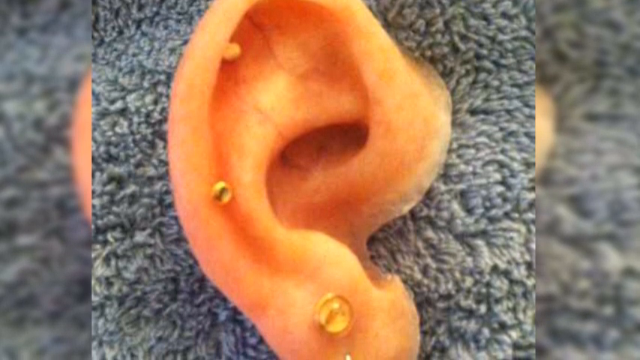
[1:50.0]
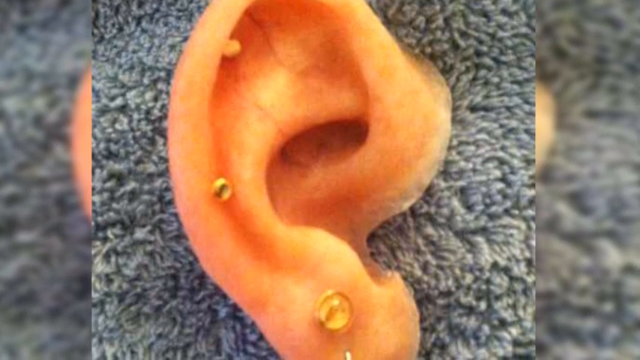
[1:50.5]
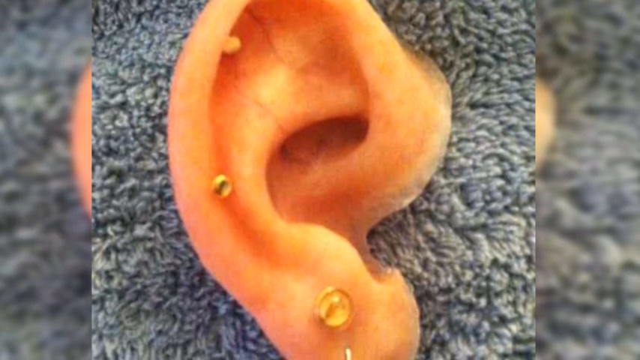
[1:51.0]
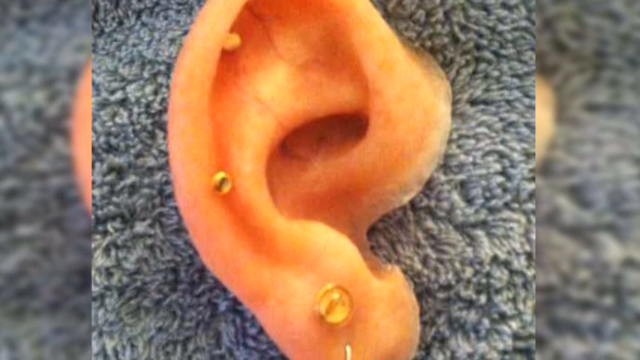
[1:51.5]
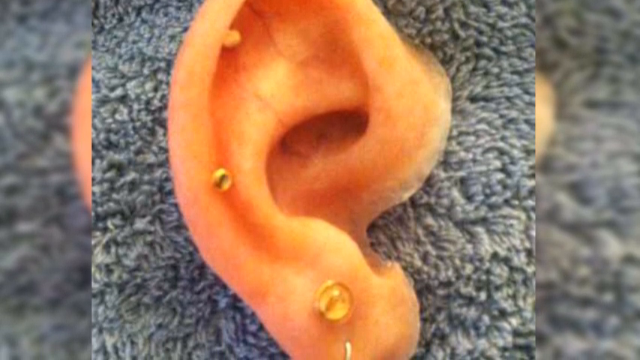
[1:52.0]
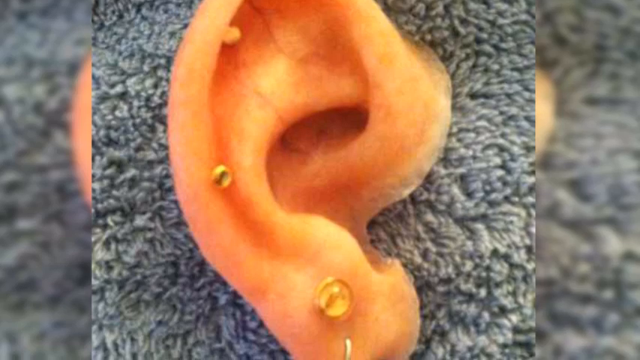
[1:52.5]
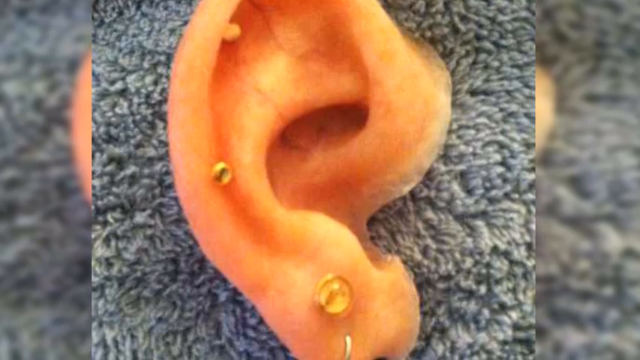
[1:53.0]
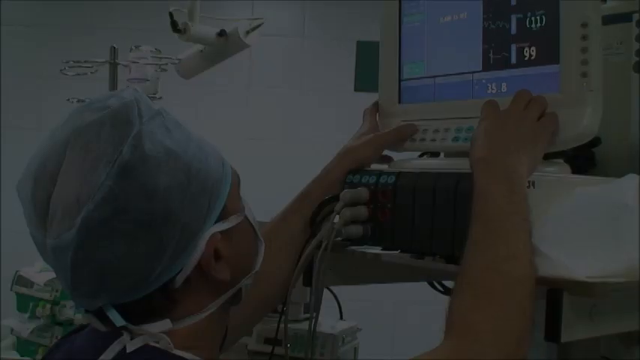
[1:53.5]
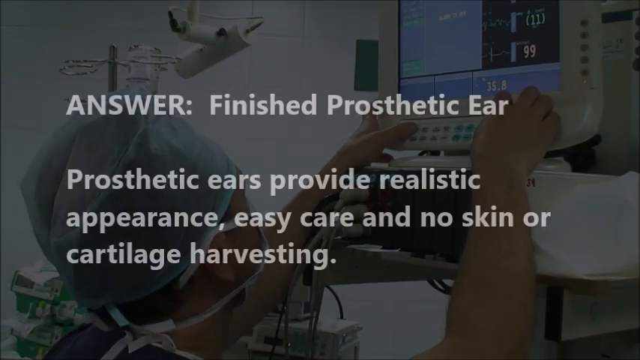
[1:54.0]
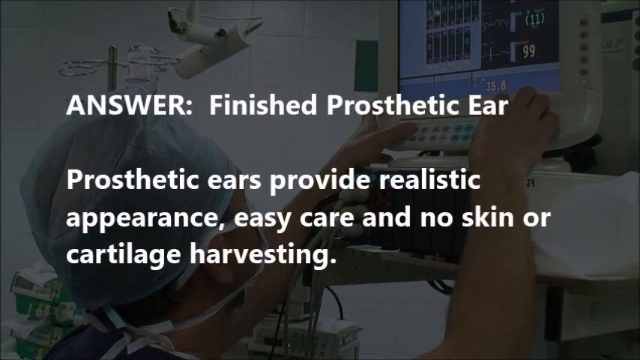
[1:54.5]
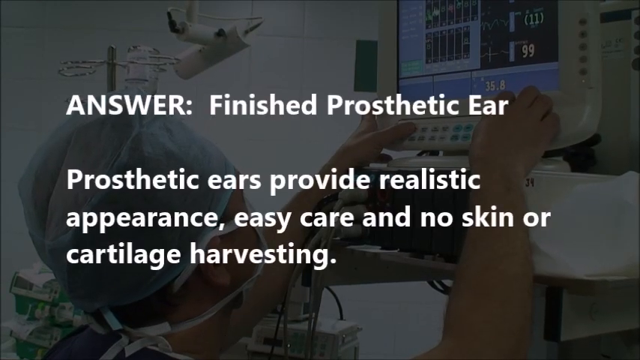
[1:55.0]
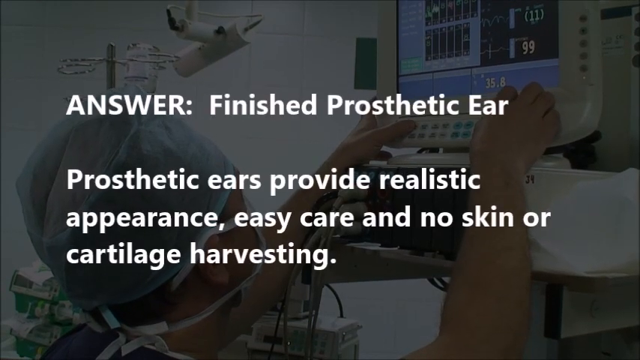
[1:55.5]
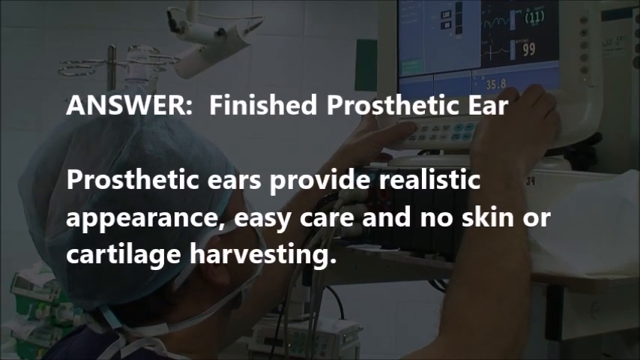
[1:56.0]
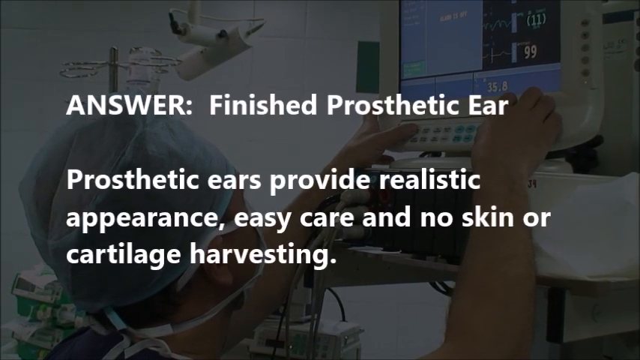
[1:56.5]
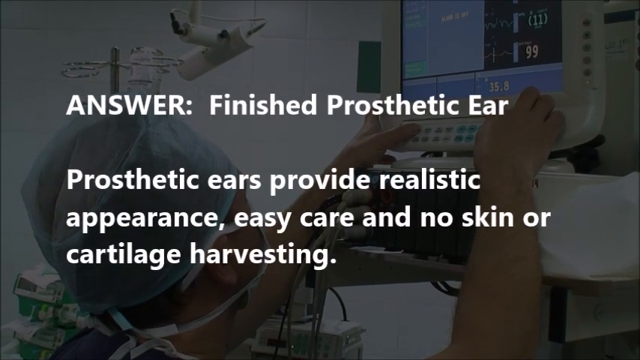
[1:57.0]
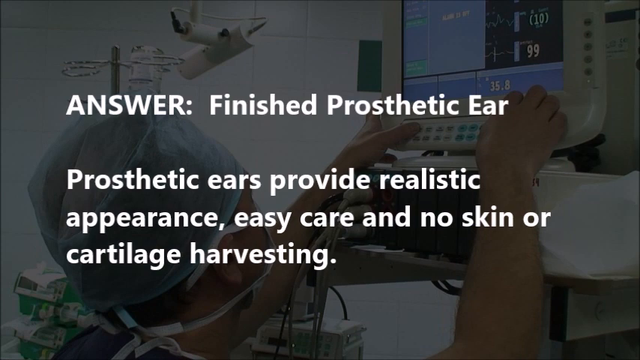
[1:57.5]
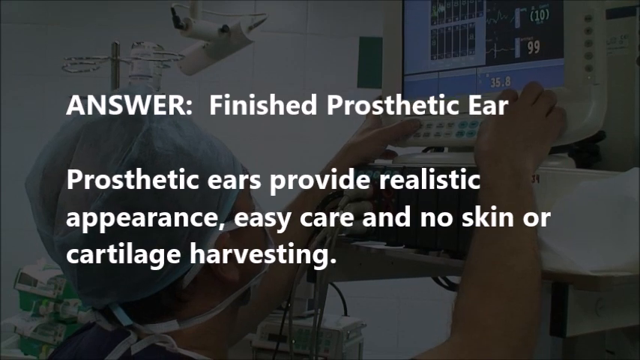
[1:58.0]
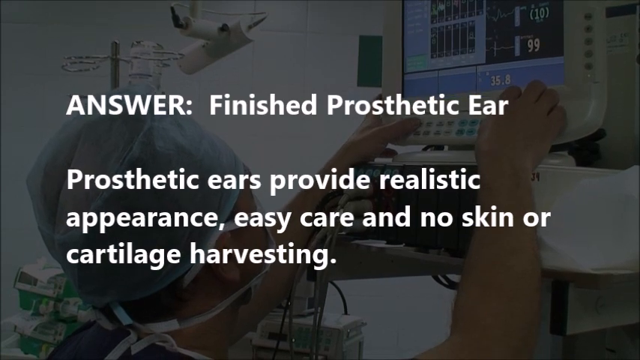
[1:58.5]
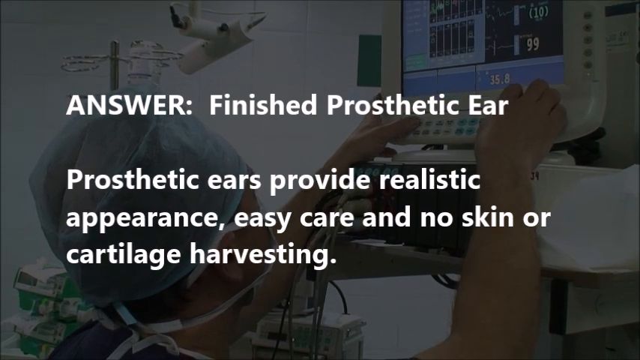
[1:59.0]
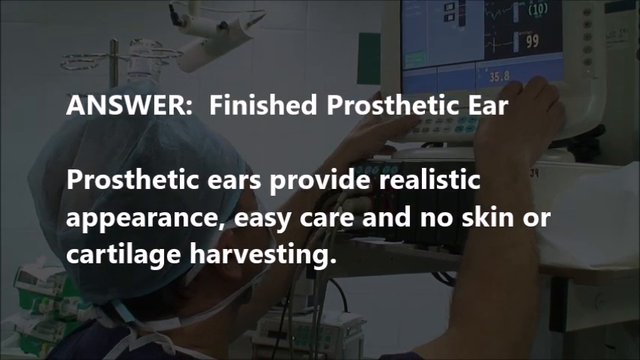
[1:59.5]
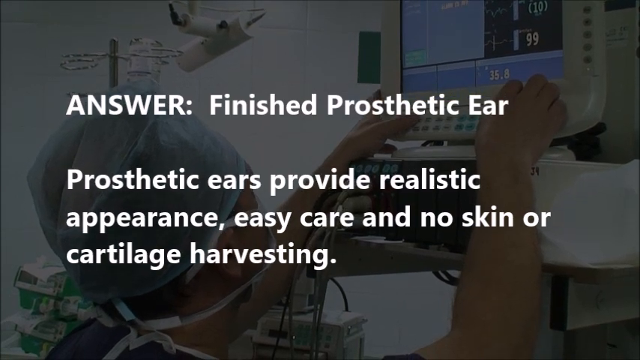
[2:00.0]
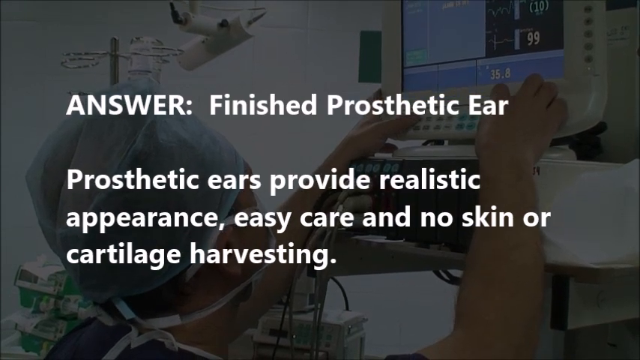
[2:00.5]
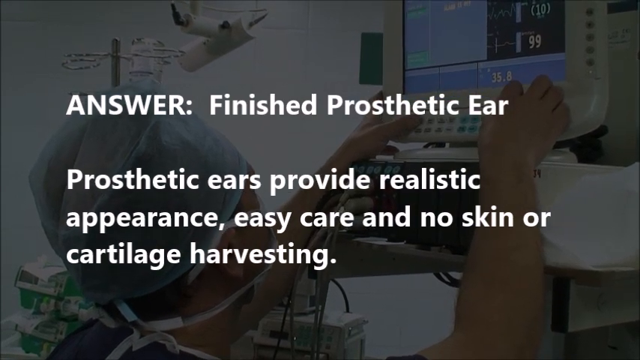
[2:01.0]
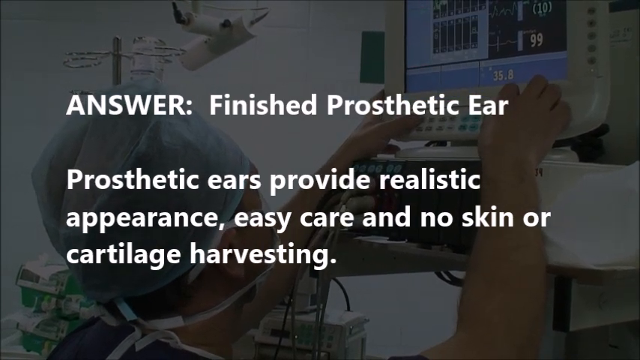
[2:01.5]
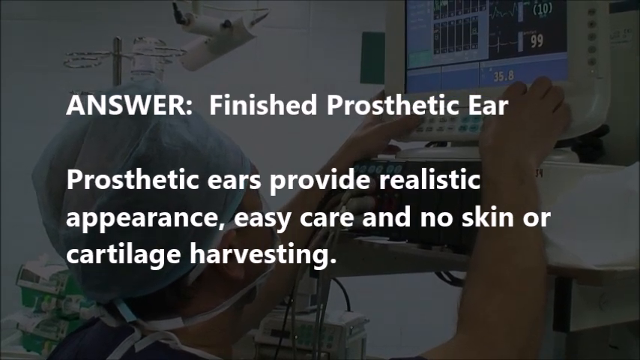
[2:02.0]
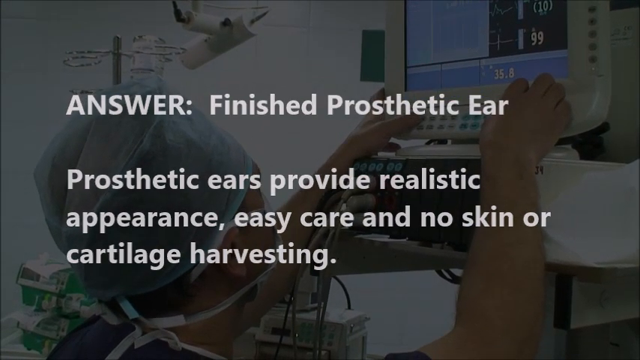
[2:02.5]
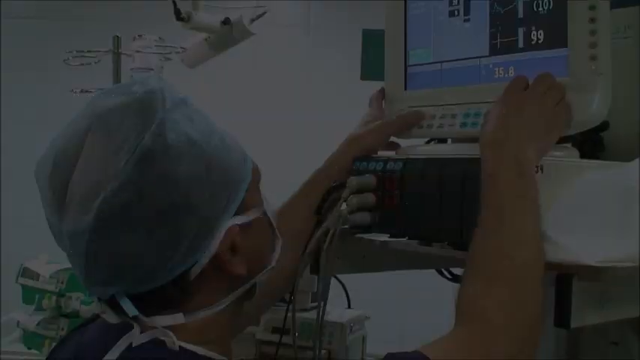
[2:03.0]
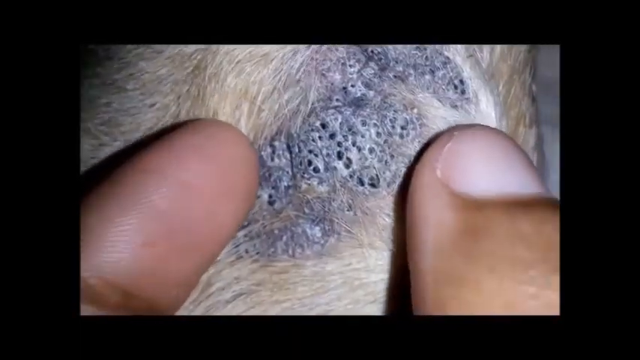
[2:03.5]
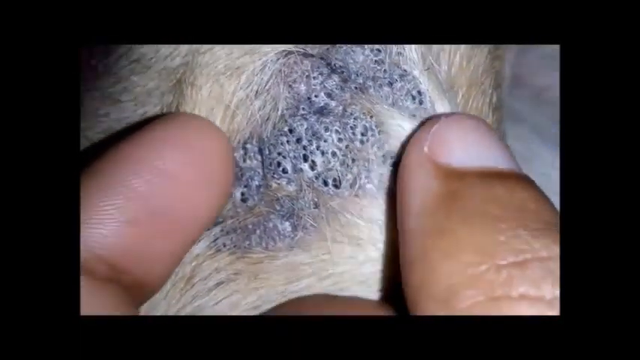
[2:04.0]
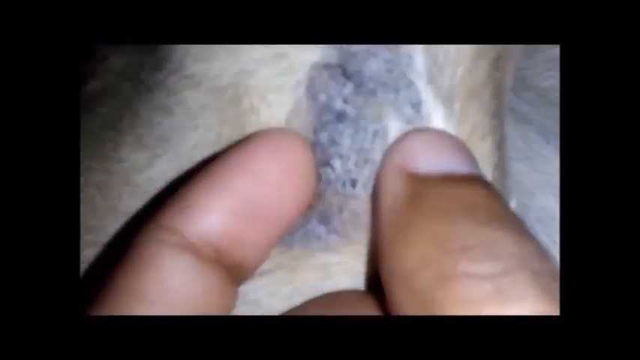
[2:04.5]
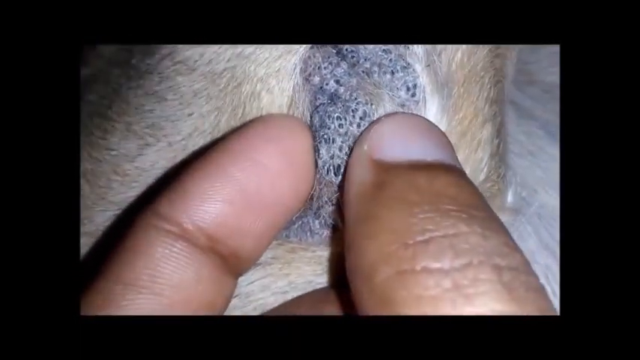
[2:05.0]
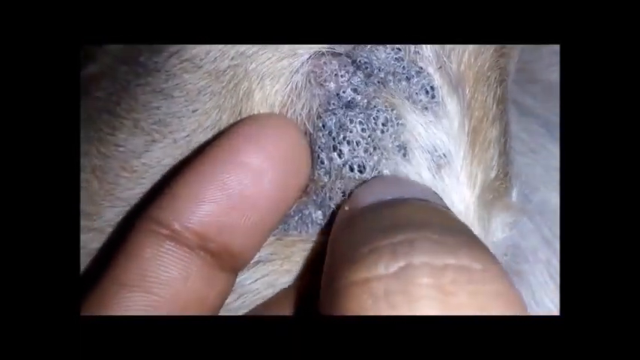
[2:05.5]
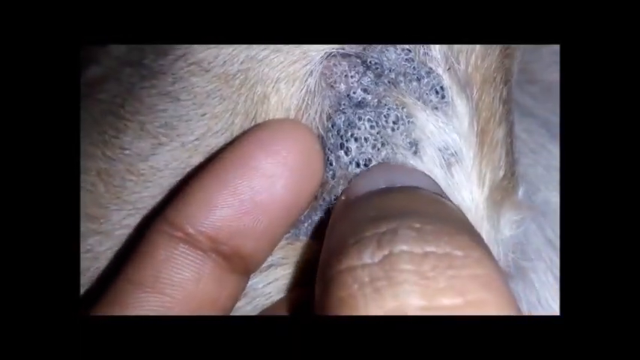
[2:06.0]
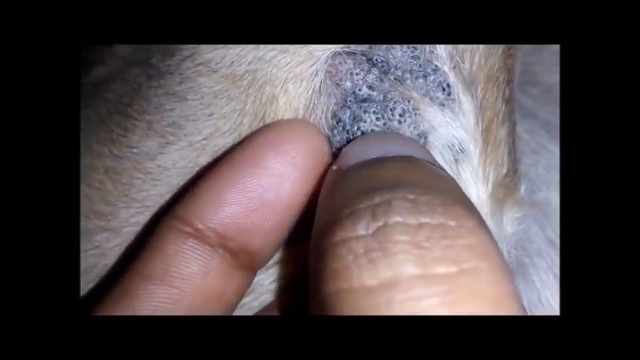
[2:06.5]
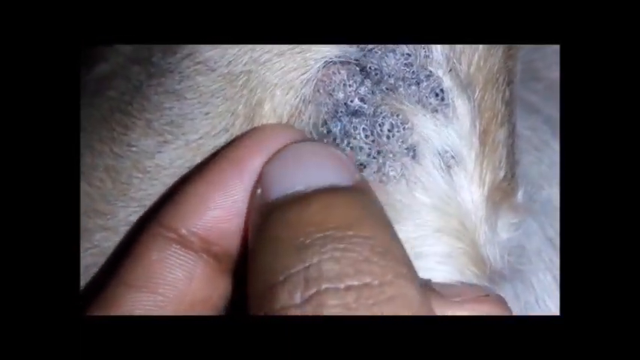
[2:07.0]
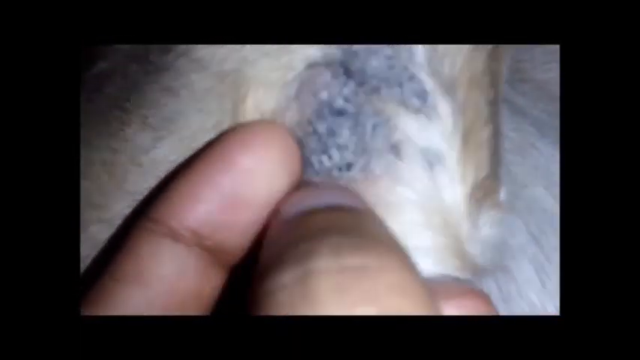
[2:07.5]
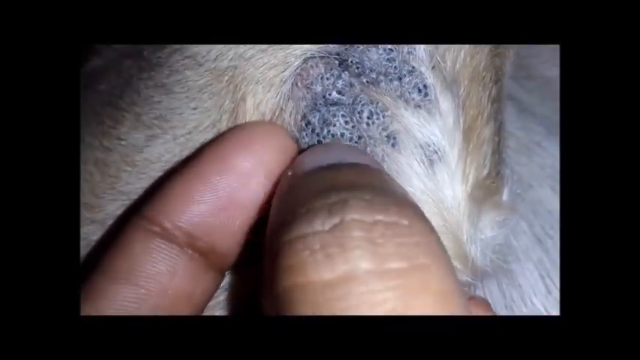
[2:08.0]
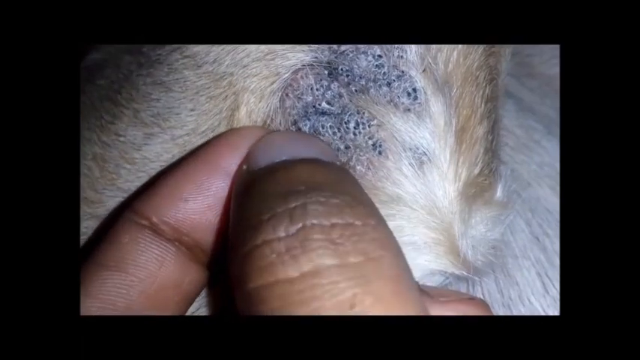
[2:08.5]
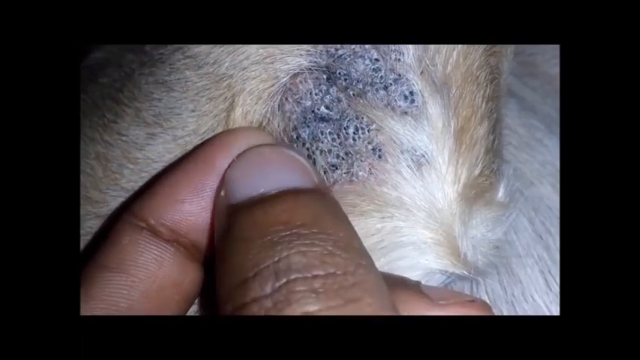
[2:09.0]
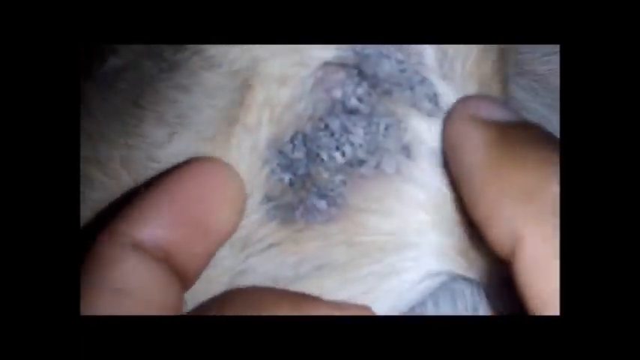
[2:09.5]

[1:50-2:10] The ear detached from the head is sitting on a grey fluffy piece of material or towel. It has three gold circles attached: a larger gold circle on the earlobe at the bottom, a smaller pinhead-like circle in the middle of the inside of the outer ear rim, and a third gold ball on the inner outer ear. Small red veins are visible on the inside of the ear. The screen then changes to a description page reading "Answer finished prosthetic ear. Prosthetic ears provide realistic appearance, easy care, no skin or cartilage harvesting." Behind it, the same doctor in a surgical mask and hat reaches his arms up to a monitor with changing black boxes on the left side of the screen and changing numbers on the right; he moves something at the bottom of the monitor to alter the images above. The image then returns to the animal's body with the grey and black cysts or lesions, as a person's thumb and forefinger squeeze the skin together, showing the raised bumpy lesions. The person uses their fingernail to show the texture.